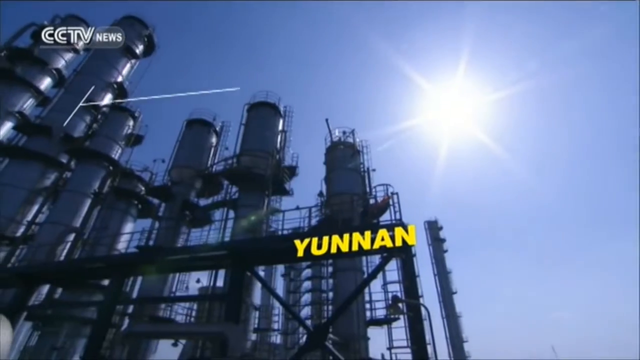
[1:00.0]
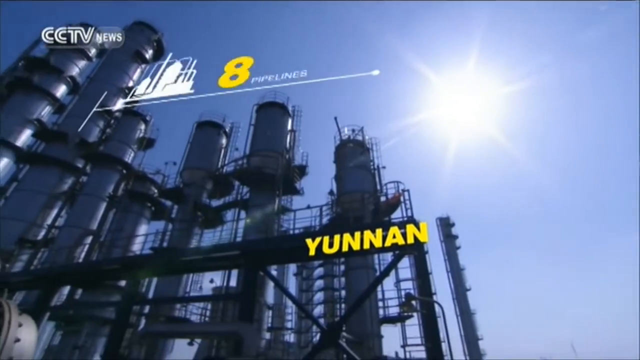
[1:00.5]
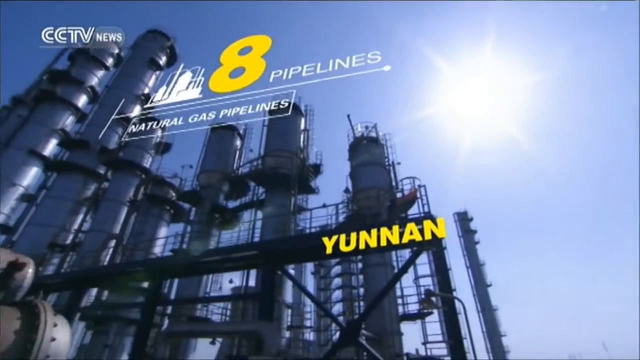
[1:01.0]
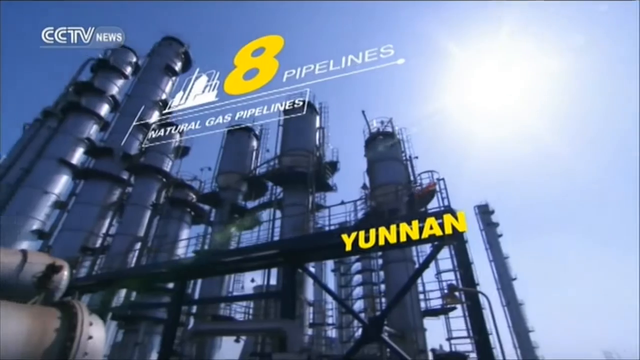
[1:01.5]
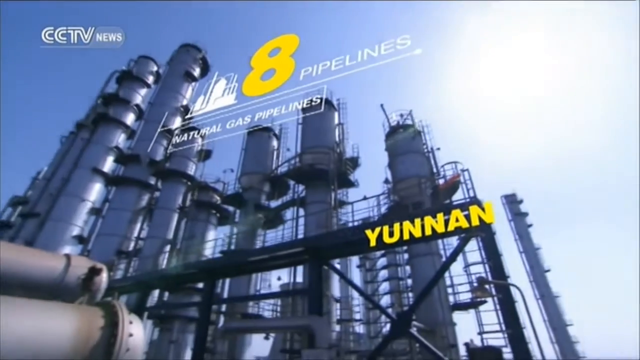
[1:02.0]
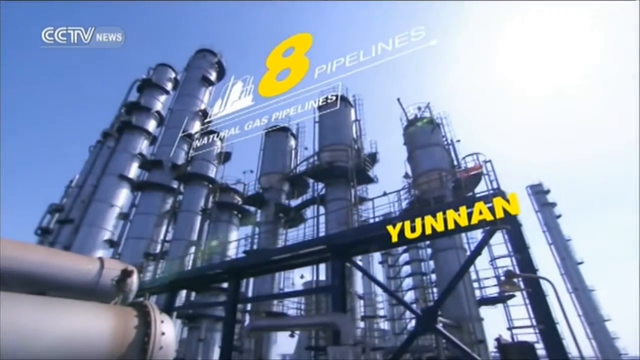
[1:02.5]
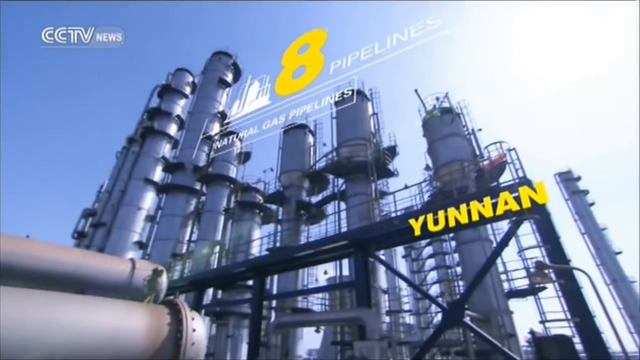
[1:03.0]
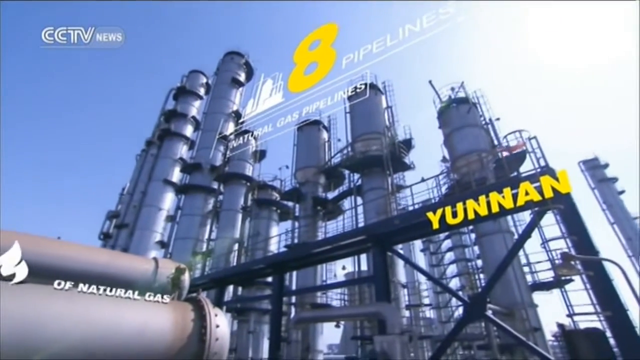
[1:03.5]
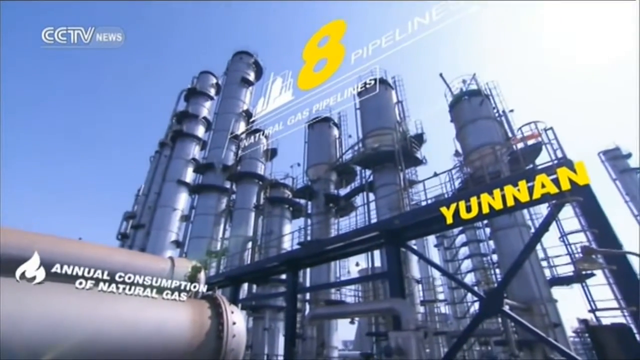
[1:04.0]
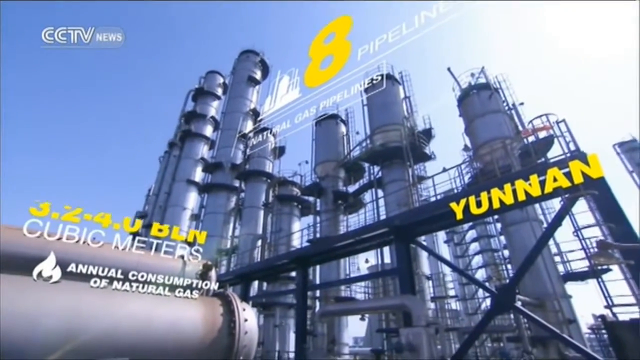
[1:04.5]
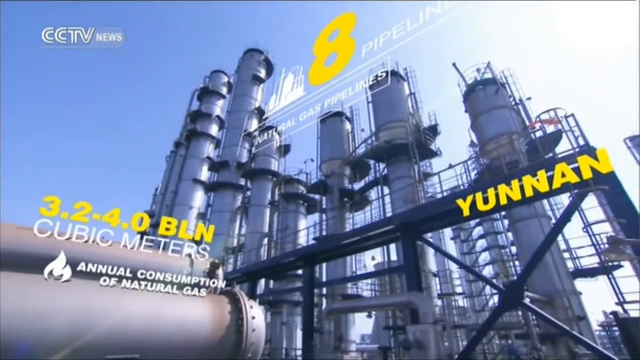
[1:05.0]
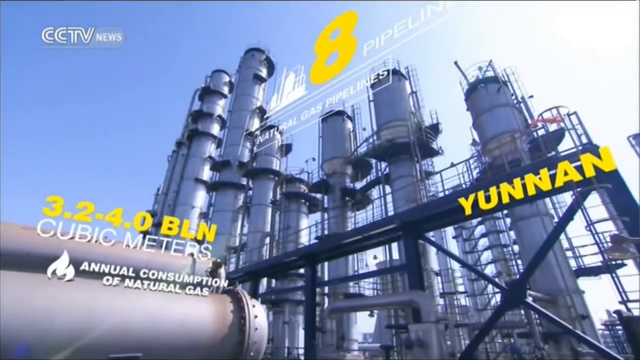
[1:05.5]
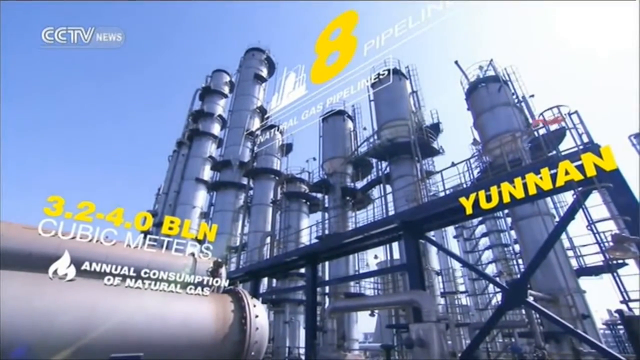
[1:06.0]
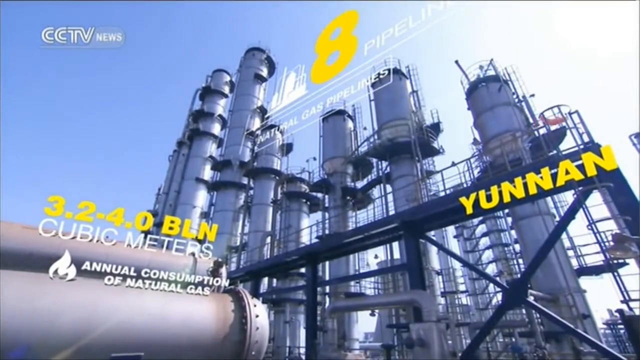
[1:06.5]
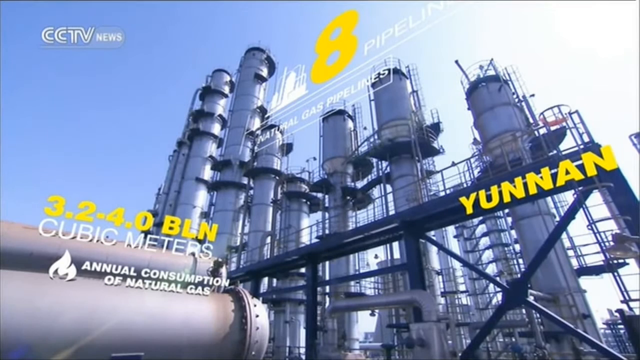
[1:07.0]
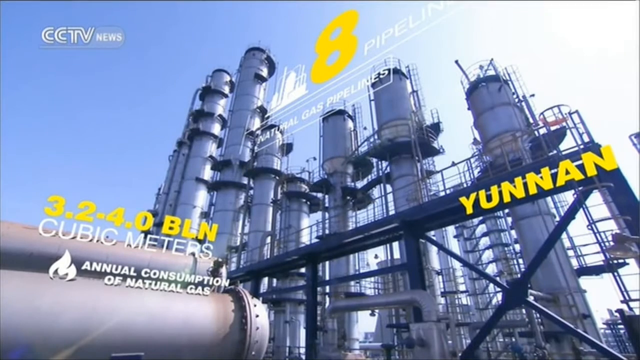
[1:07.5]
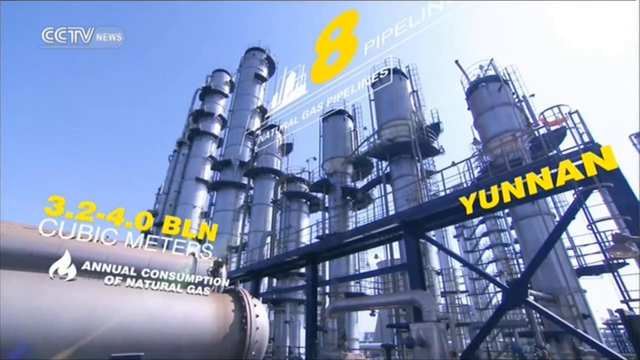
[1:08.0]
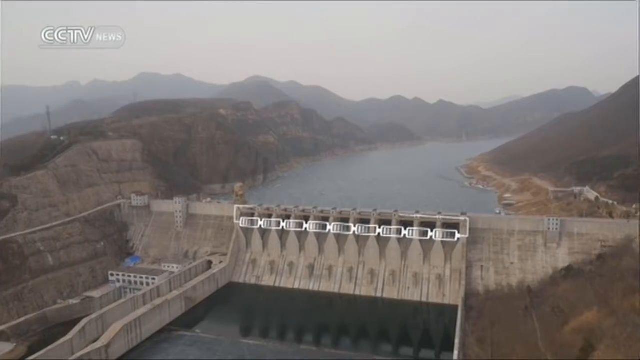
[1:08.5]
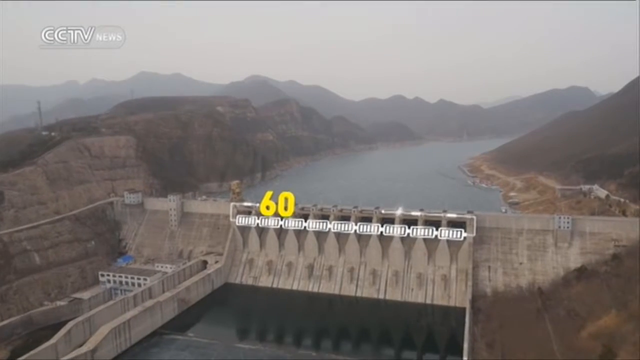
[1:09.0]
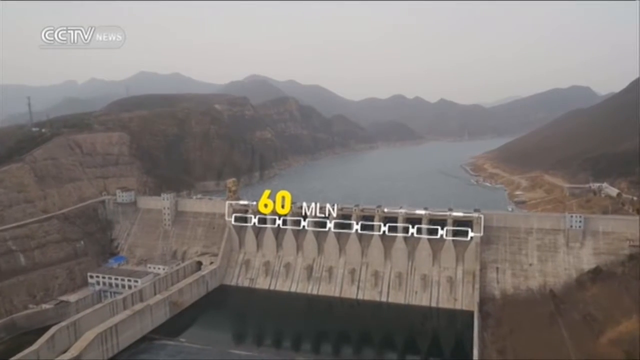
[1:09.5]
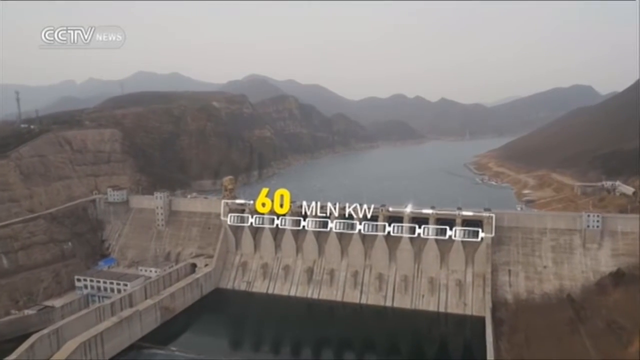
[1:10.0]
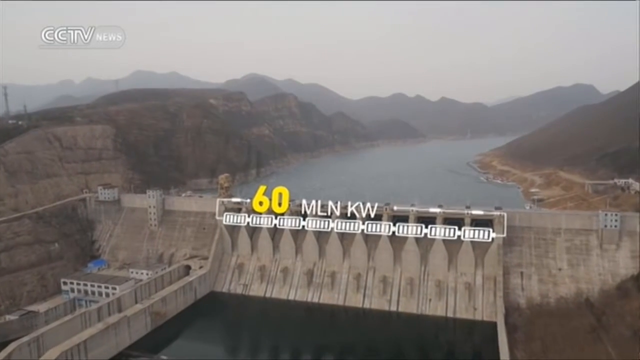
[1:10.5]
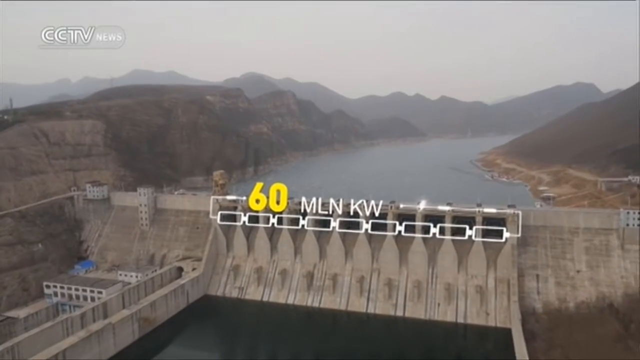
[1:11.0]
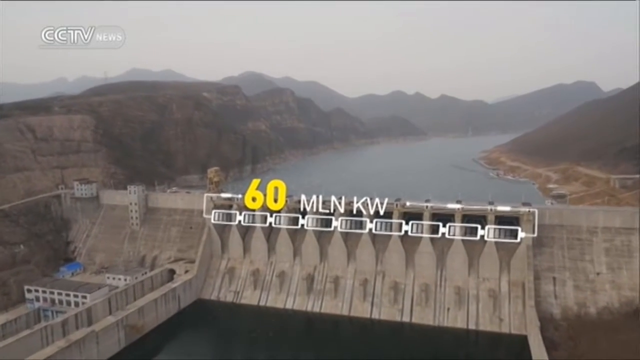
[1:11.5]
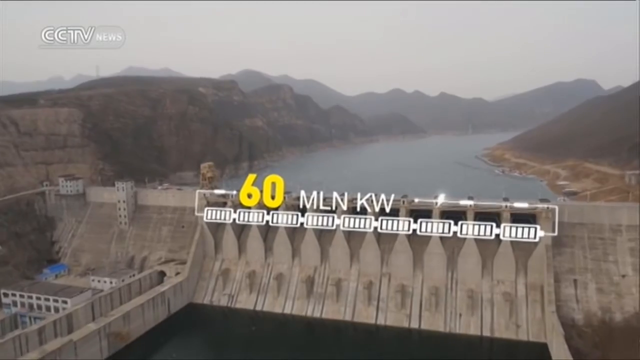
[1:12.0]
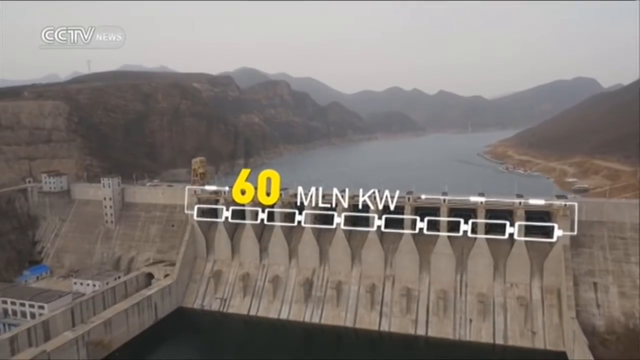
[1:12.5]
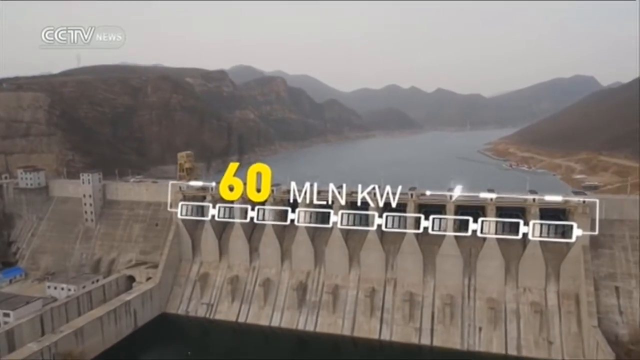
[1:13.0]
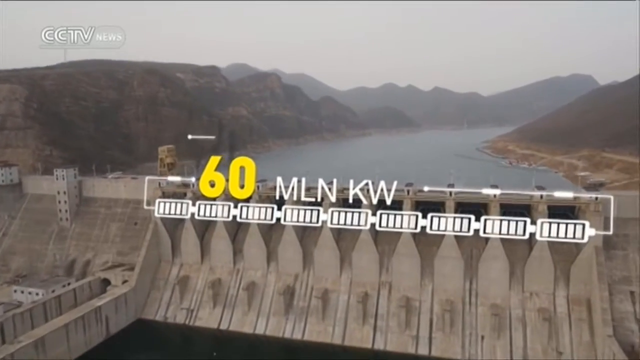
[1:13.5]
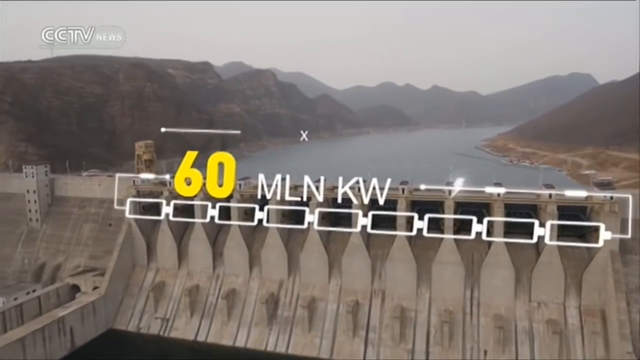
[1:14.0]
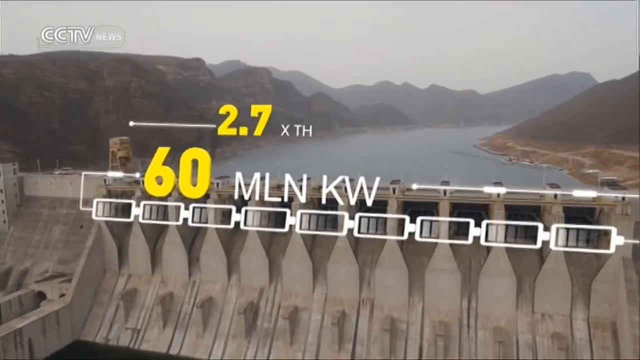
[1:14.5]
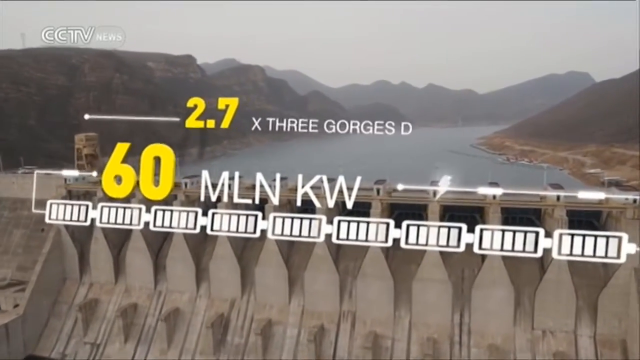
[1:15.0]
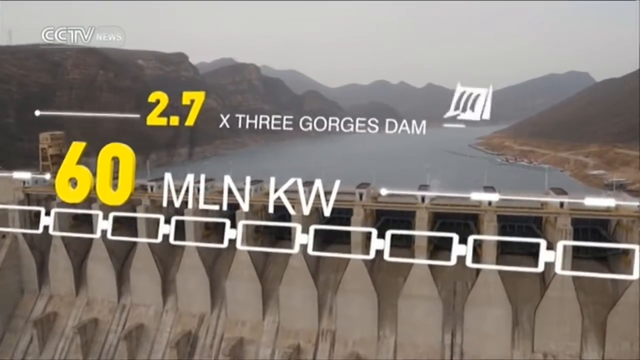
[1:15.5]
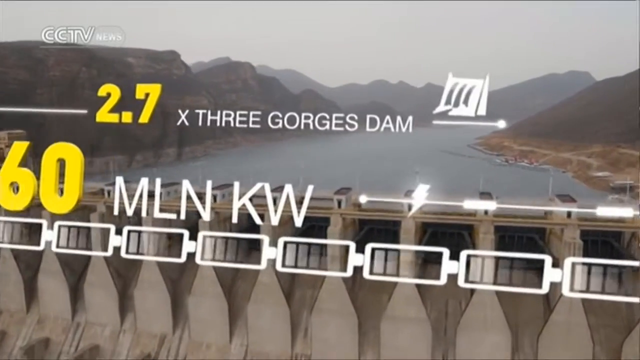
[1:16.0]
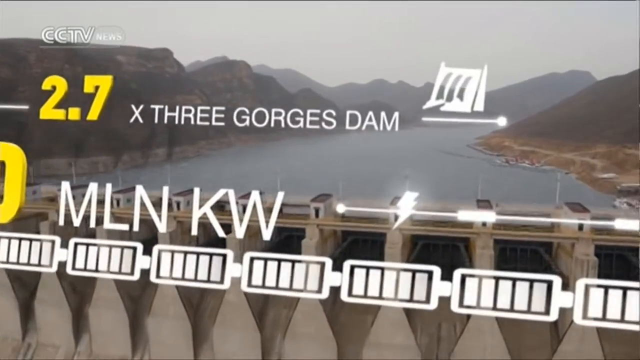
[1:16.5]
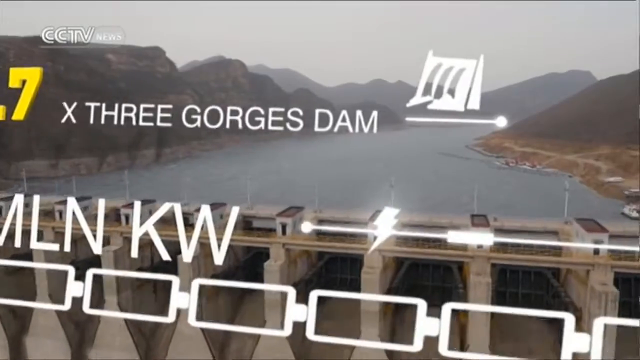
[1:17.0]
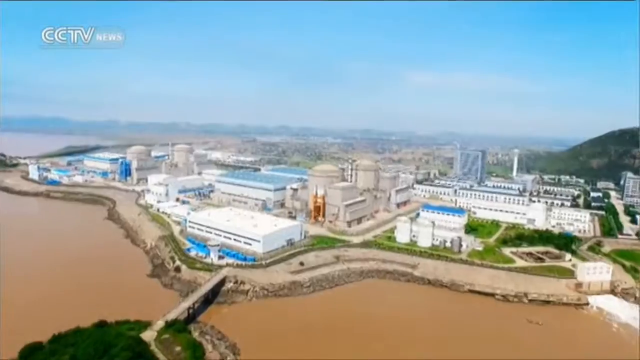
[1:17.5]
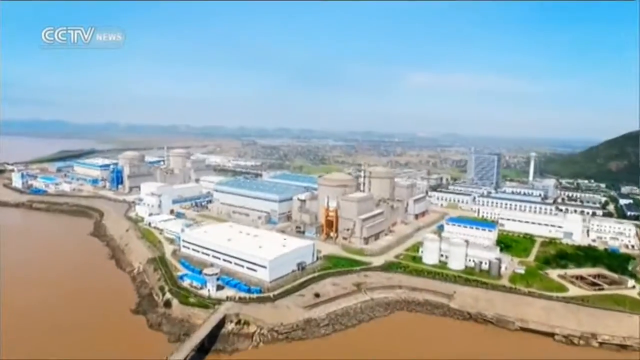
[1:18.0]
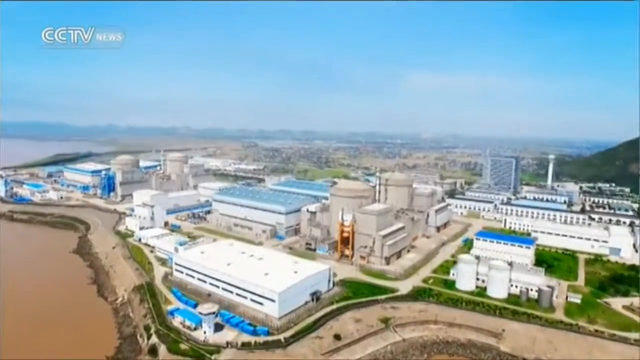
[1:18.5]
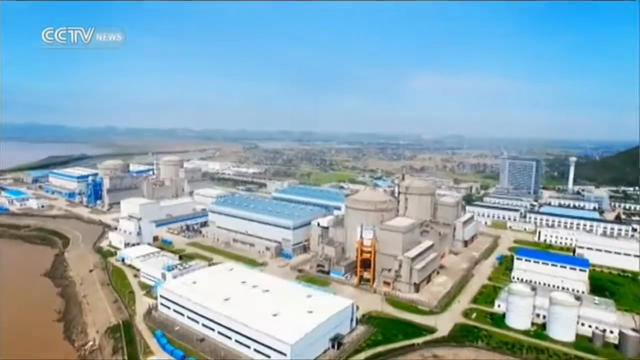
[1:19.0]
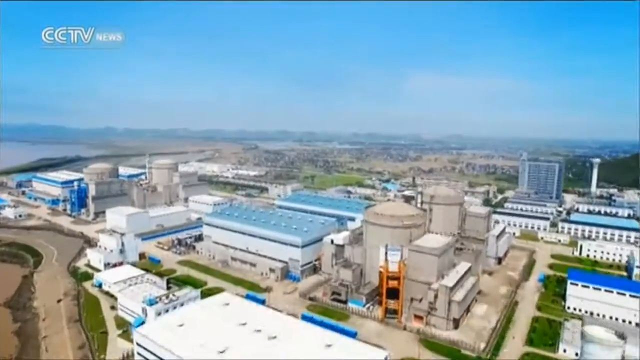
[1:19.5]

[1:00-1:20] "CCTV News" appears in white at the top left, and in the middle of the screen yellow text reads "Yunnan," followed by "eight" in yellow and "pipelines, natural gas pipelines." Big pipelines are shown. Text reads "3.2 to 4.0 billion cubic meters annual consumption of natural gas," alongside a picture of a fire. Text then reads "60 MLNKW, 2.7 times 3 George Dam." Buildings appear, then the view returns to Yunnan and the pipelines, showing how big they are and how much space they take up. With the 60 MLN kilowatts, little batteries showing full signal flash on screen. The view scrolls through a city with tall buildings in the daytime, with lights visible. Mountains are in the background, rocks are on the side, and the water is very blue. Seen from overhead, the buildings look like newer buildings.